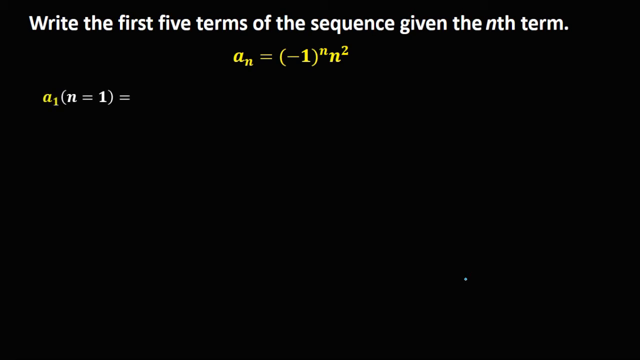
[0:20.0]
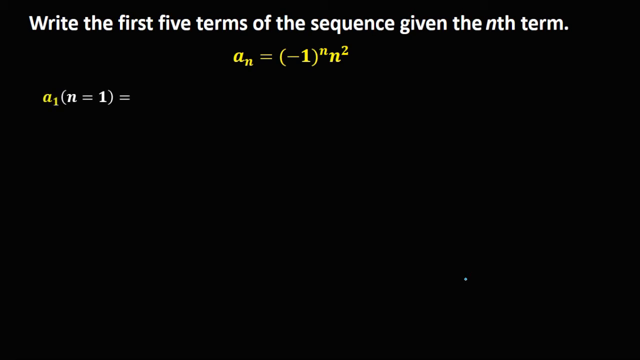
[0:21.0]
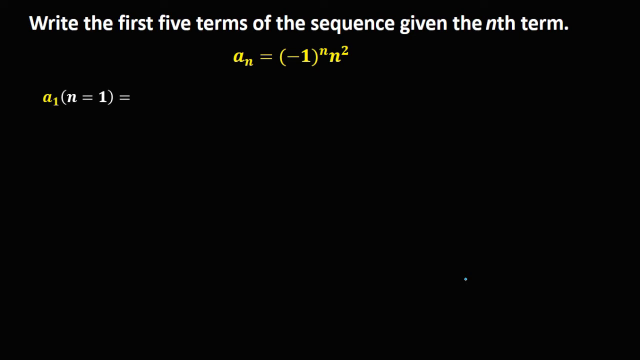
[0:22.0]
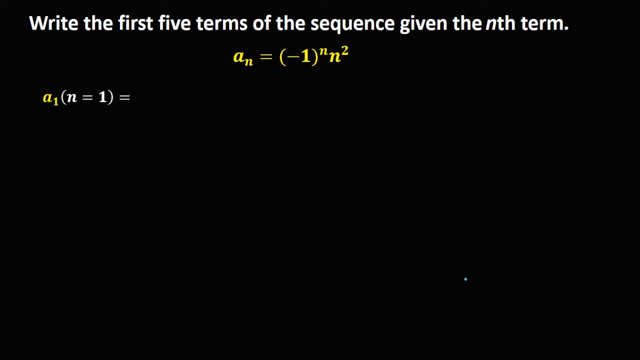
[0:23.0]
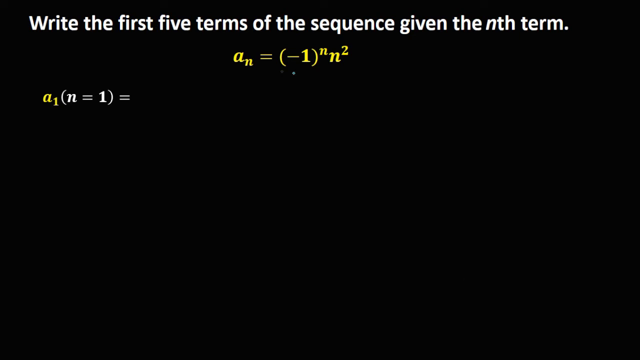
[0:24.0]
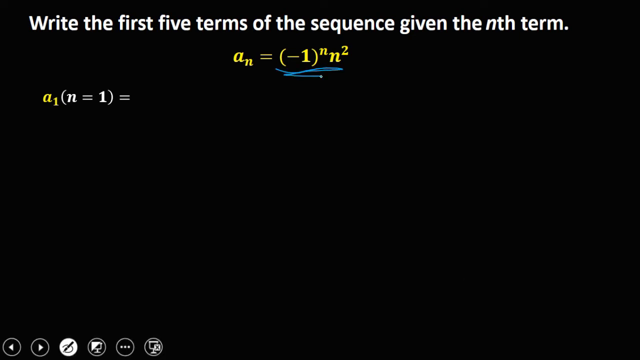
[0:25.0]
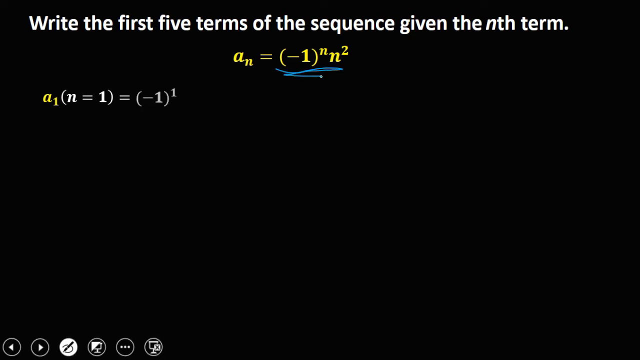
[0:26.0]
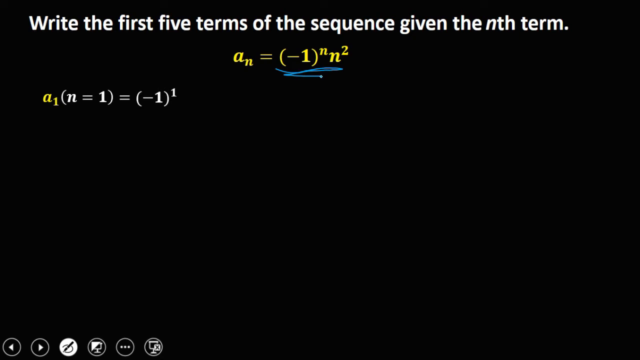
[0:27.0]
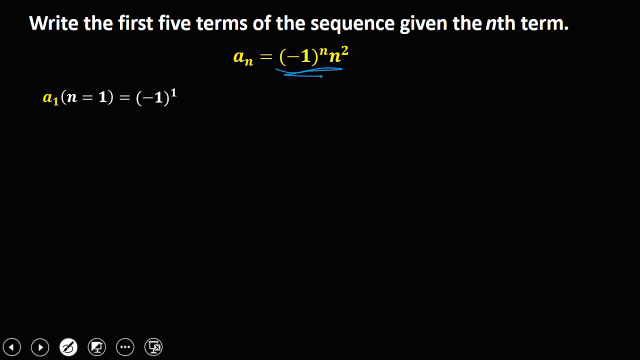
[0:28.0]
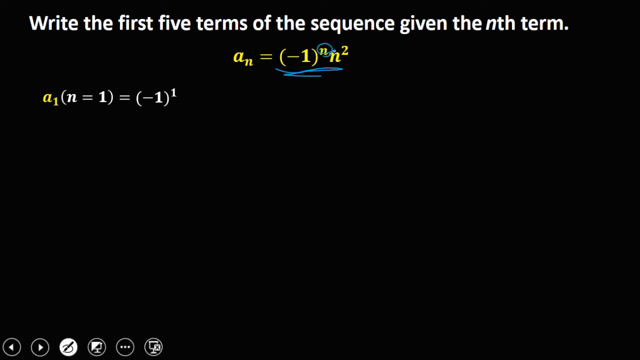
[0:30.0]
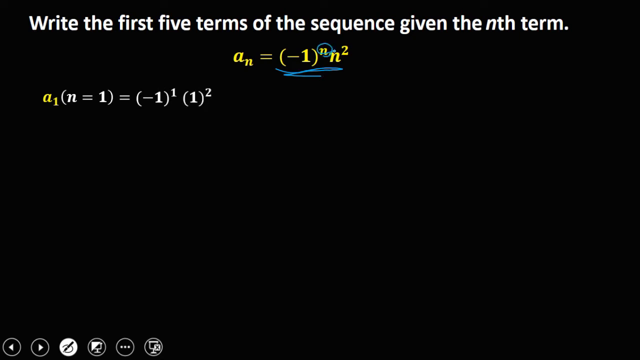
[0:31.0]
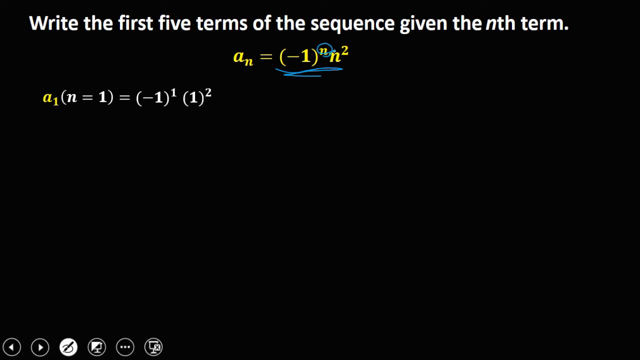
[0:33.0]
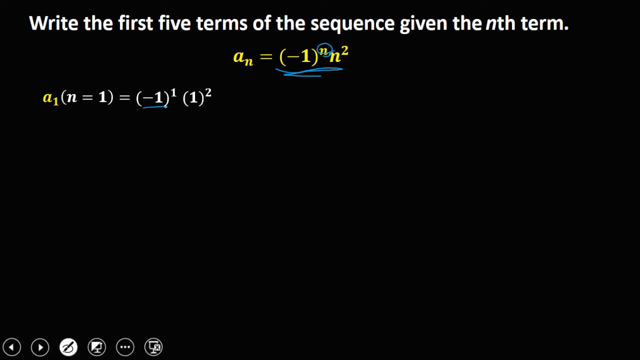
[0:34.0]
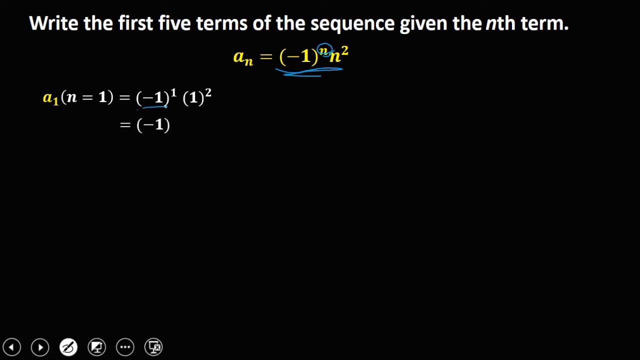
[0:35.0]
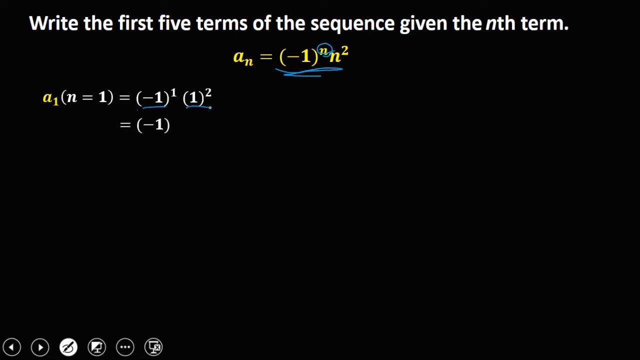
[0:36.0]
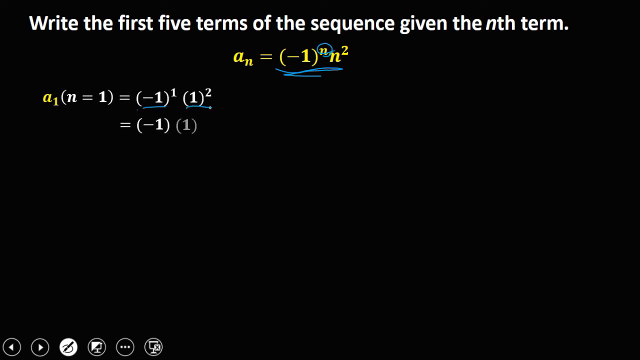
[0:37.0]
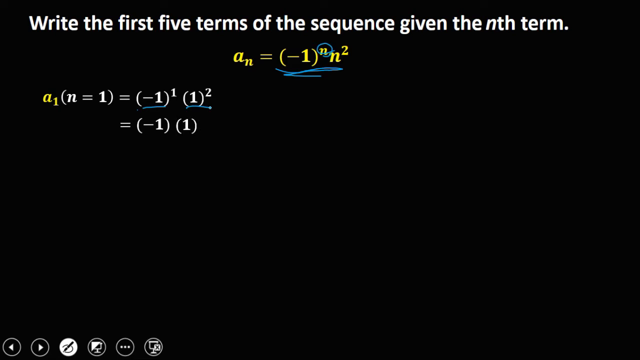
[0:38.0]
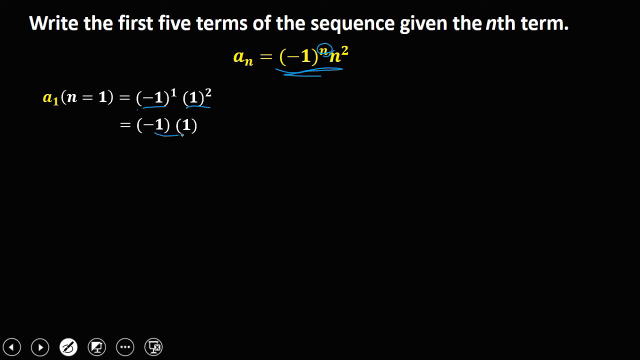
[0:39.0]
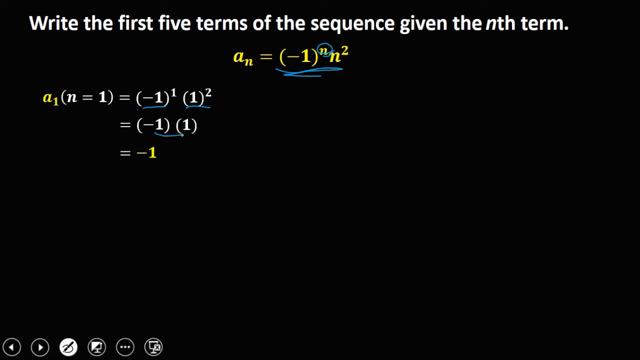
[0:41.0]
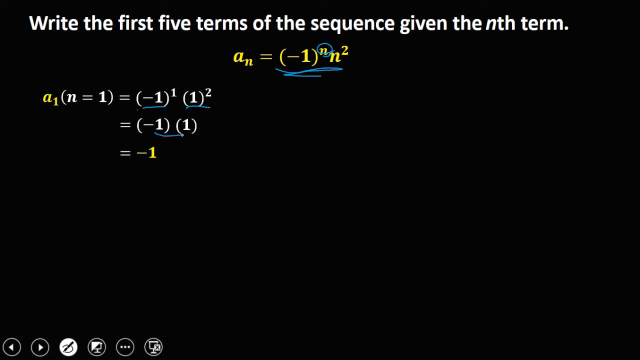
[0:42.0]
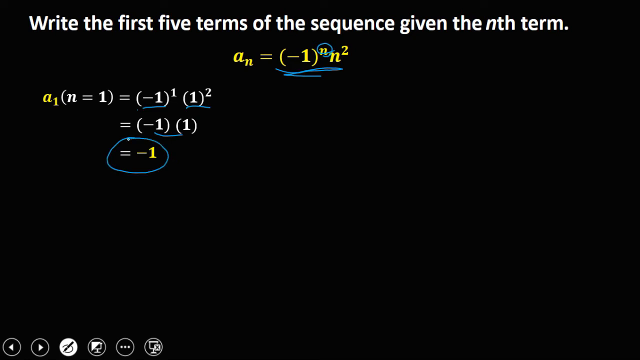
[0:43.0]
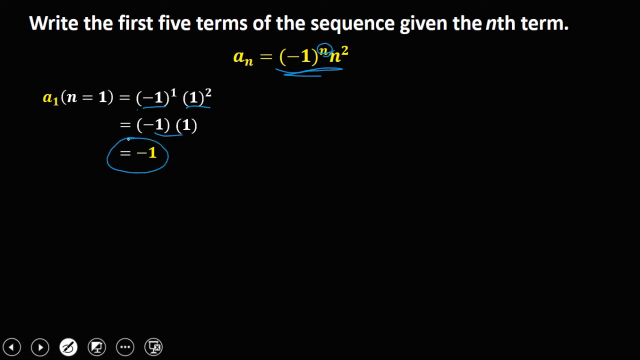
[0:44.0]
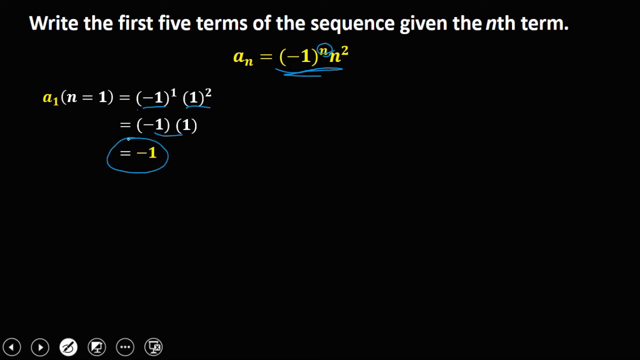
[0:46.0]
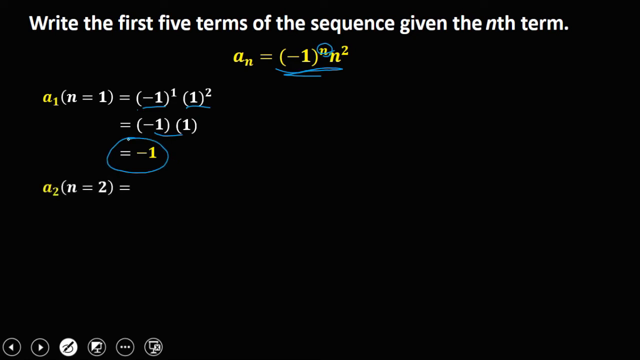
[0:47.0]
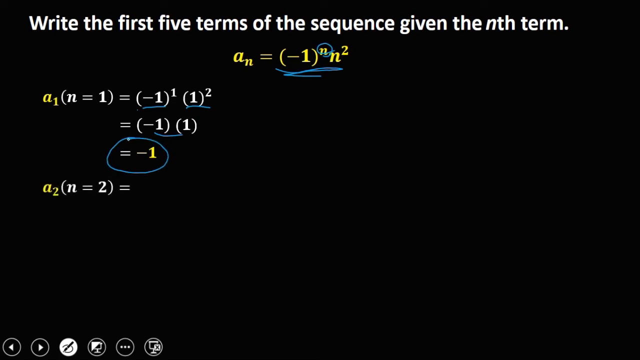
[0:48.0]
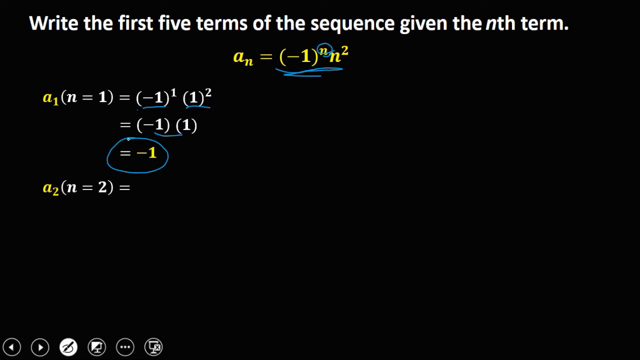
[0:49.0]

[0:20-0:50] The tutorial continues with the rule a subscript n equals negative 1 to the nth power multiplied by n squared. For a subscript 1 (n = 1), 1 is substituted for n, giving negative 1 to the power of 1 multiplied by 1 squared. This becomes negative 1 multiplied by 1, which equals negative 1, so the first term of the sequence is negative 1.